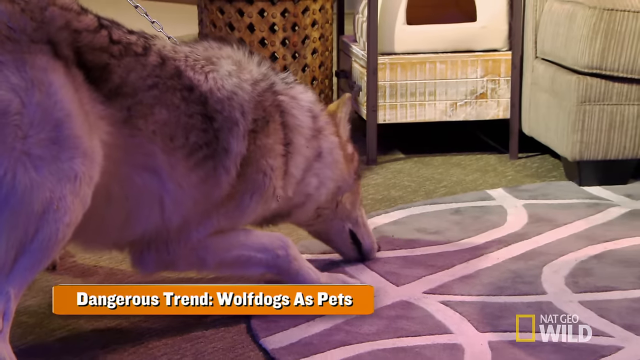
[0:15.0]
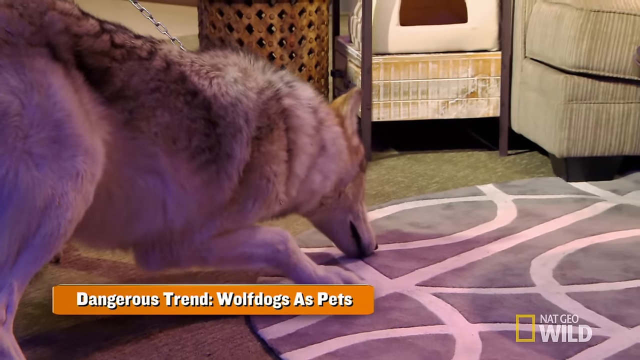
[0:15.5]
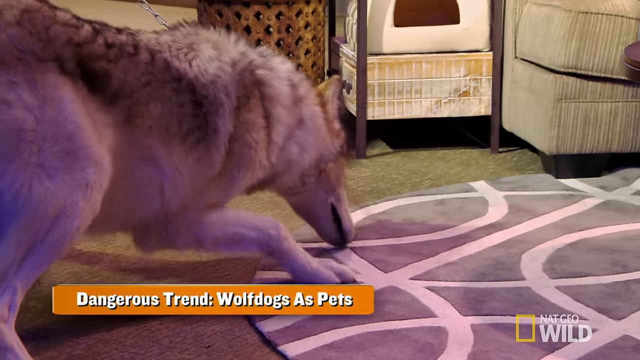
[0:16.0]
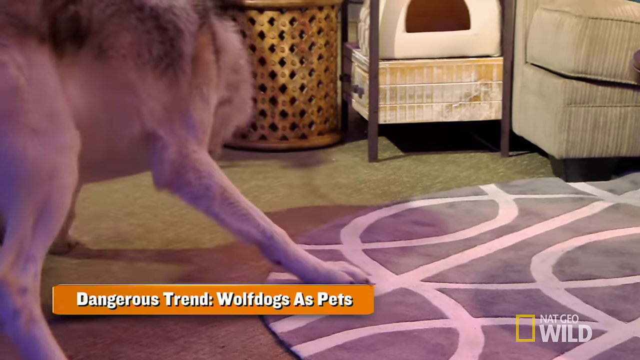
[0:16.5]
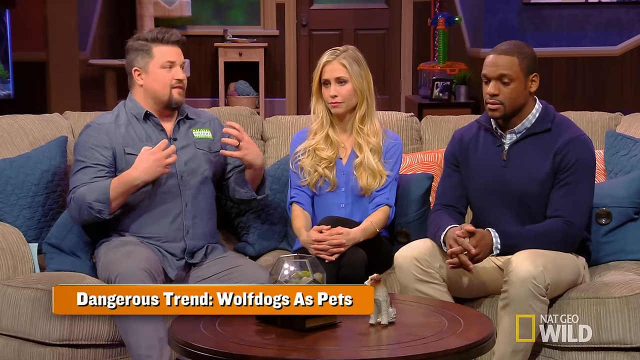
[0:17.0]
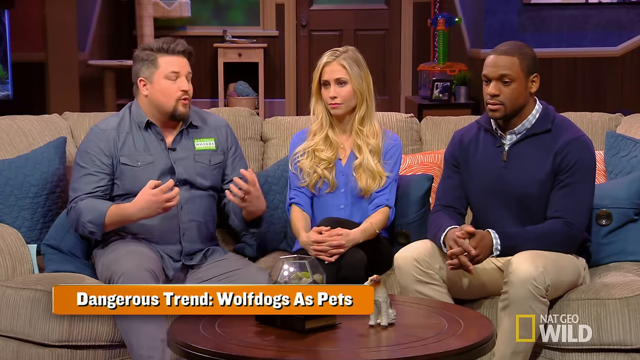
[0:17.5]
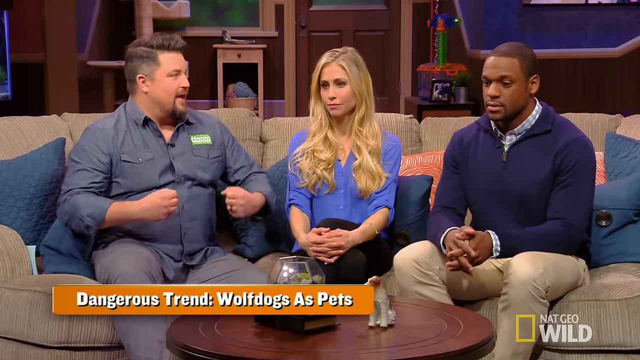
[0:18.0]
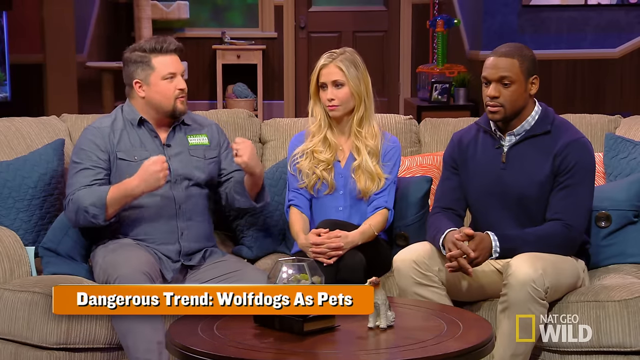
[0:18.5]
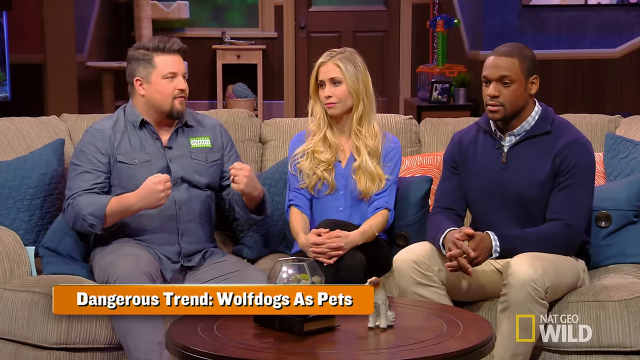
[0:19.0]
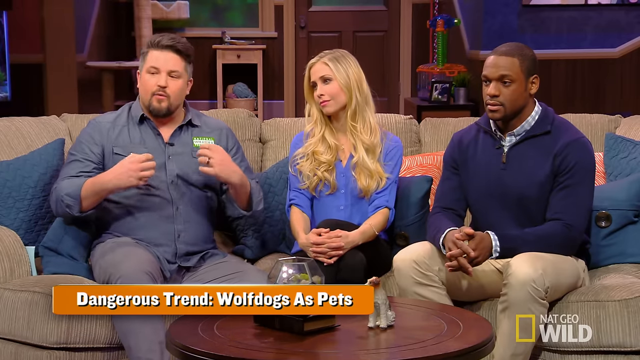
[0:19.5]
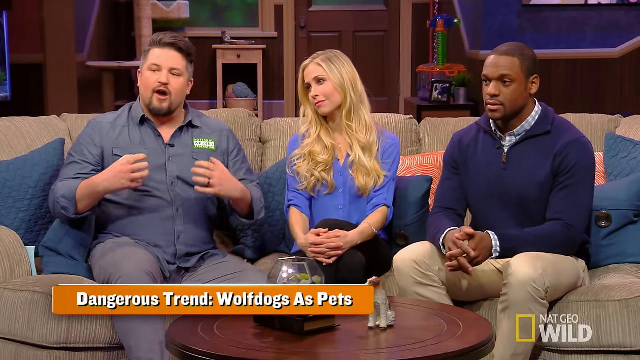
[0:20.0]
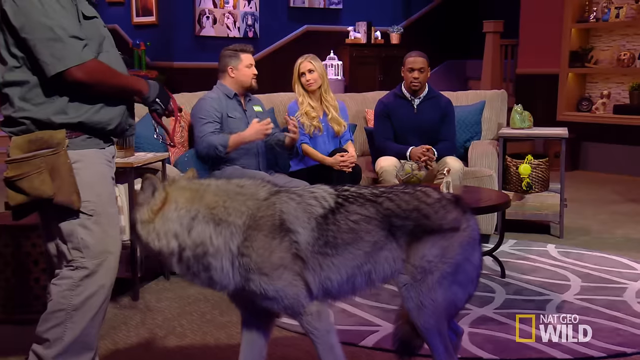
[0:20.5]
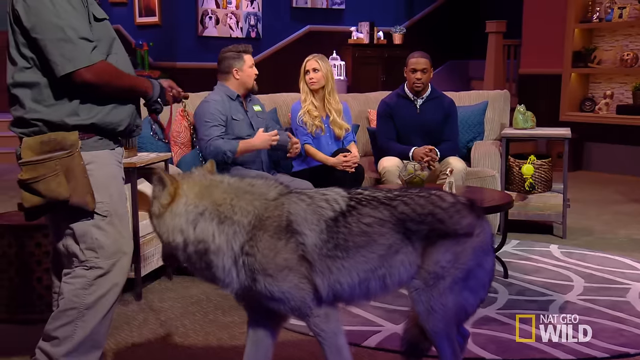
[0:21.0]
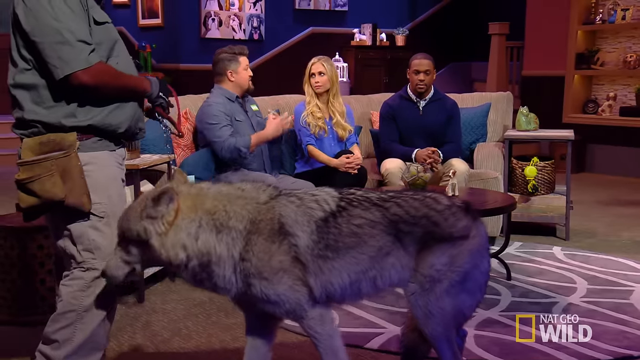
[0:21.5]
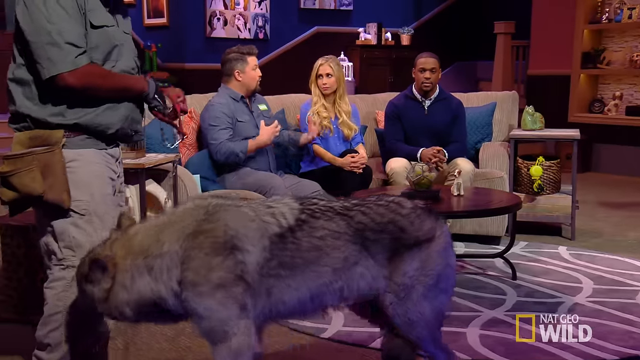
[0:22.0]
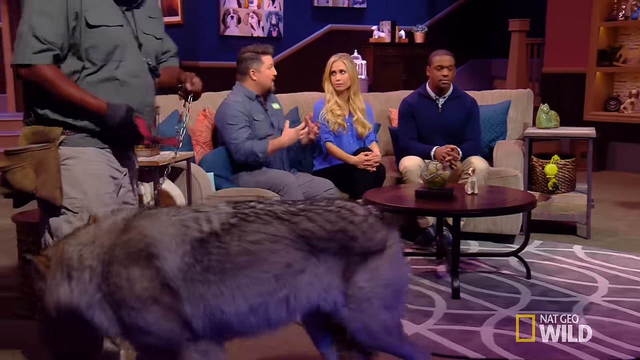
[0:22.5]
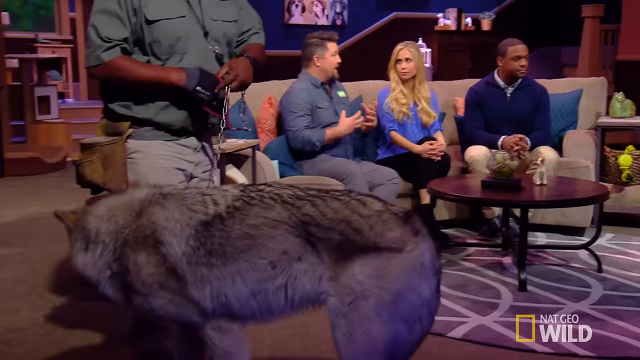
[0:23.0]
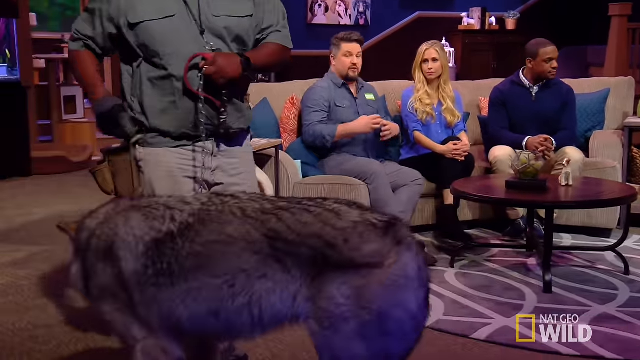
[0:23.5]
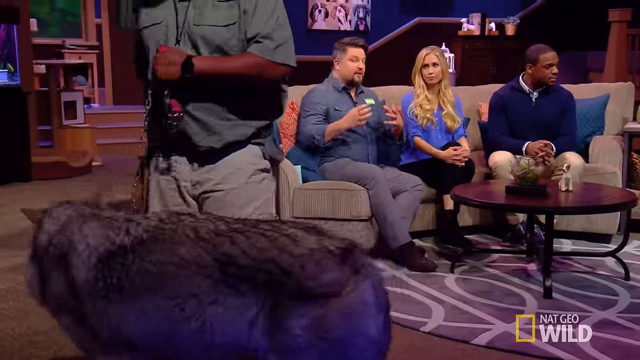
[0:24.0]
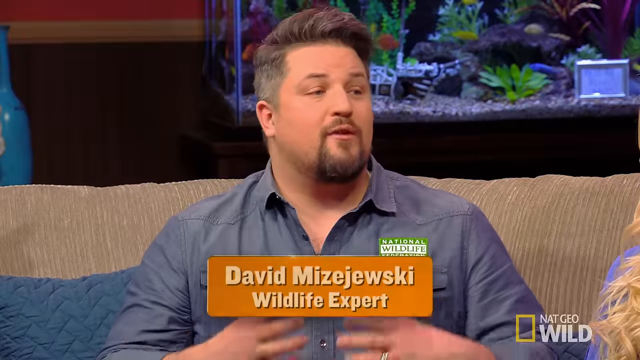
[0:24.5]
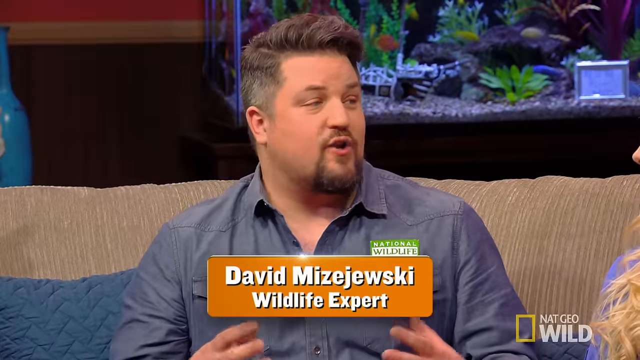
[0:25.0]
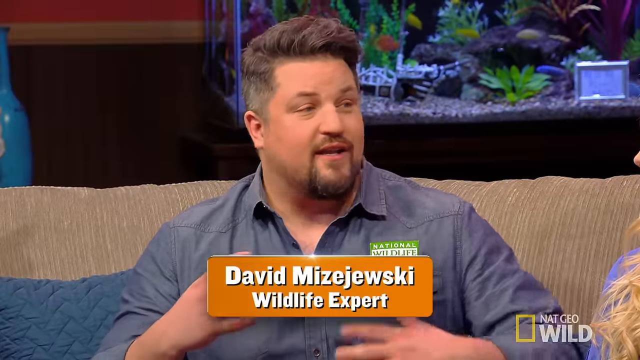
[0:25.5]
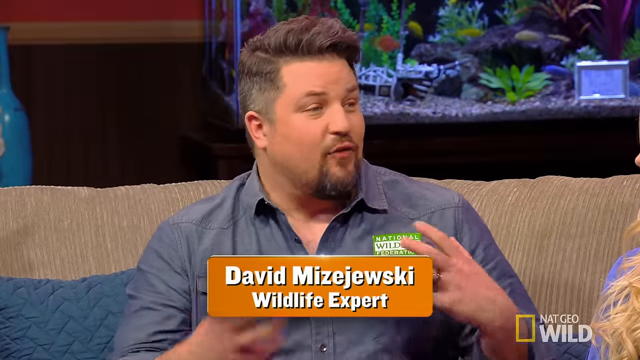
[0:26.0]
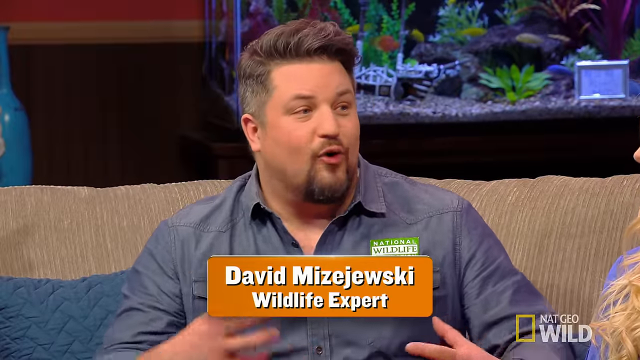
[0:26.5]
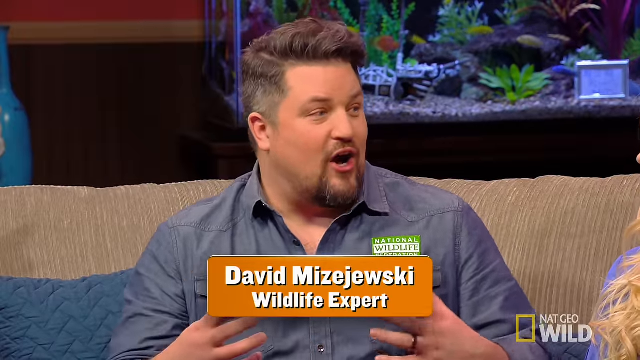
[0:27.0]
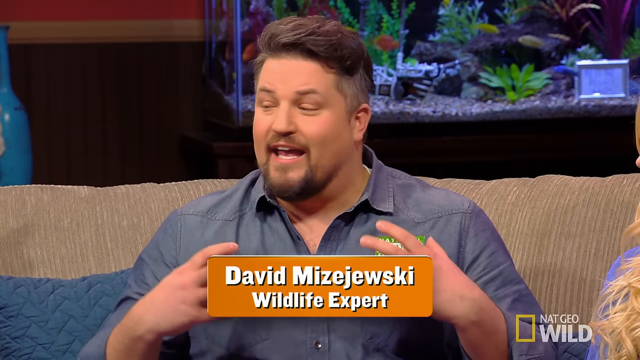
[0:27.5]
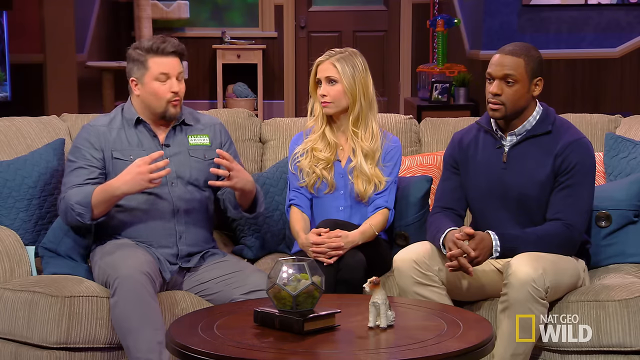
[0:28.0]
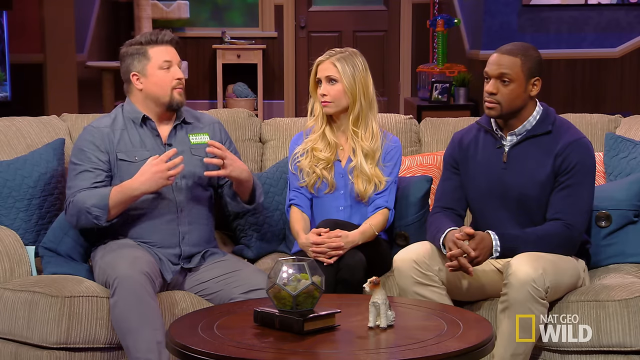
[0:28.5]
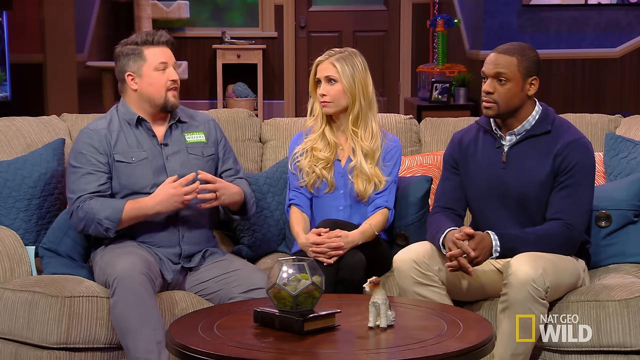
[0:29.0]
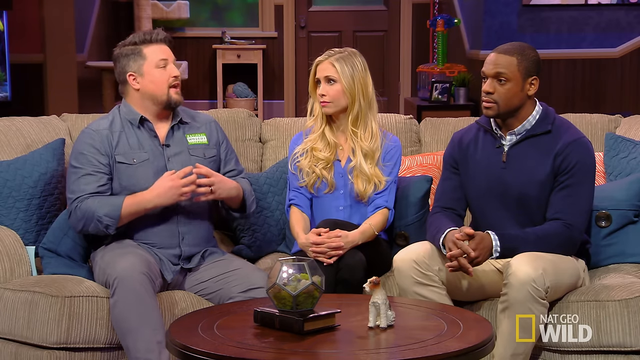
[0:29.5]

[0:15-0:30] The white man talks and demonstrates with his hands. The wolf dog sniffs a carpet while someone holds it, and there is a chain on the dog's neck. The white lady and the black man seem to be paying attention to him; his facial expression, hands and body movements make him seem knowledgeable, like a professional, as he drives his points home, apparently about the wolf dog. A glass aquarium is behind the man. The black man seems less enthusiastic than the white lady.